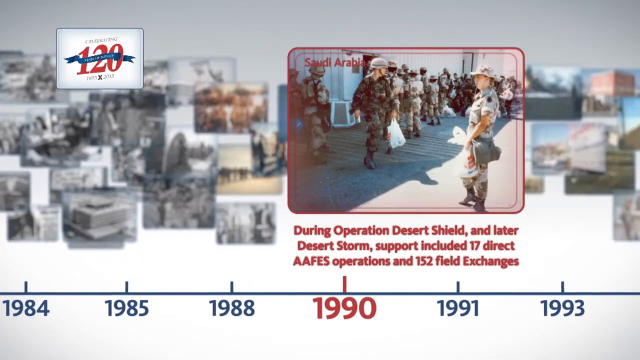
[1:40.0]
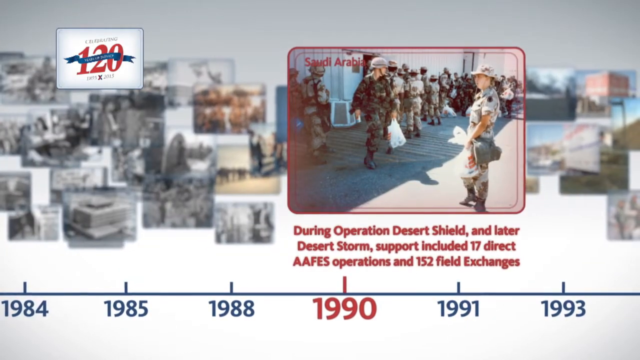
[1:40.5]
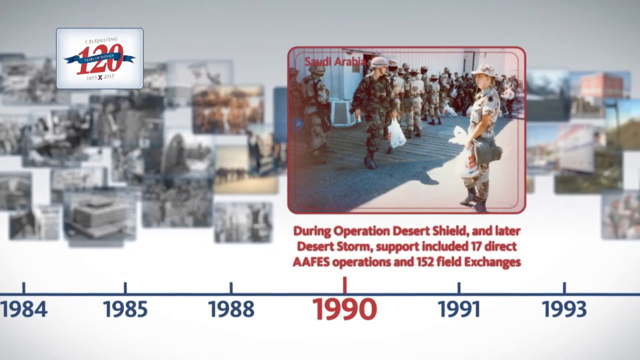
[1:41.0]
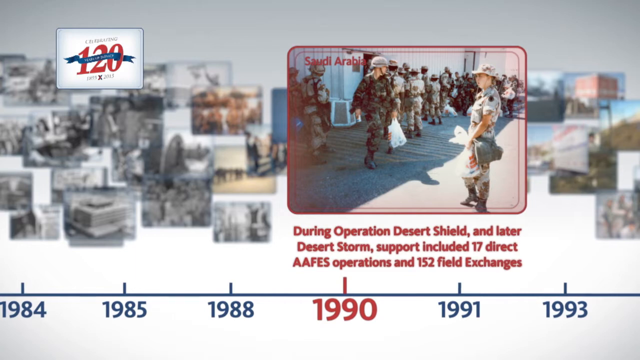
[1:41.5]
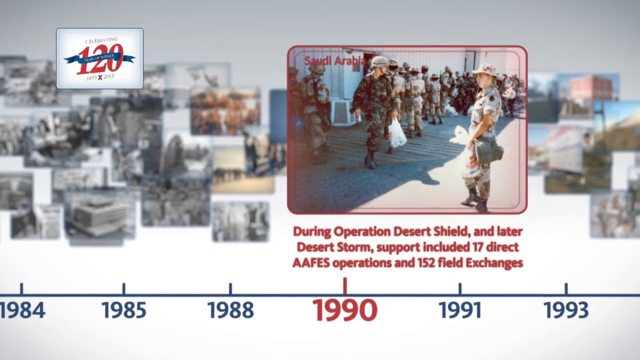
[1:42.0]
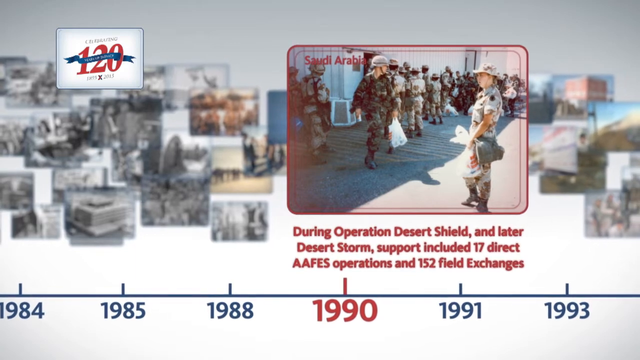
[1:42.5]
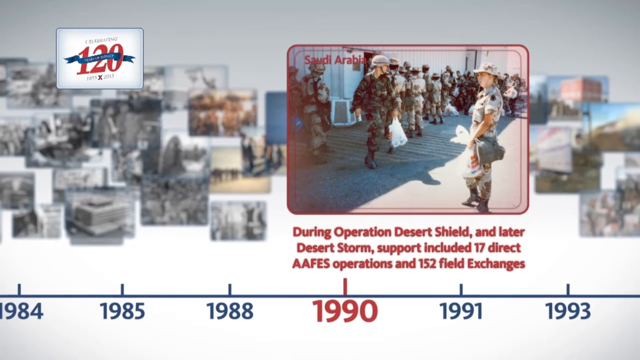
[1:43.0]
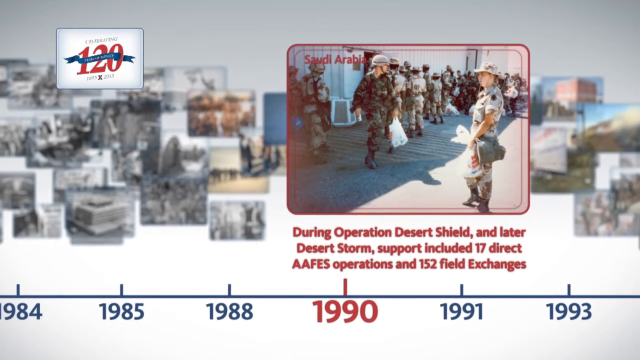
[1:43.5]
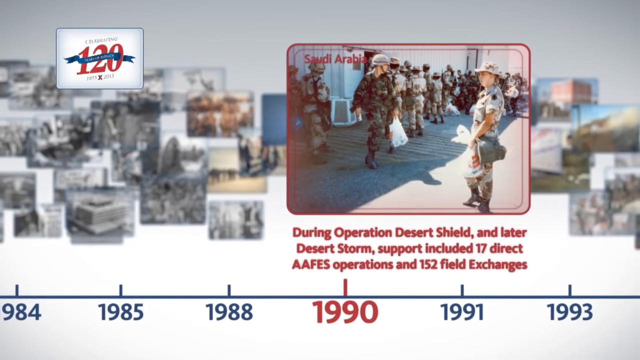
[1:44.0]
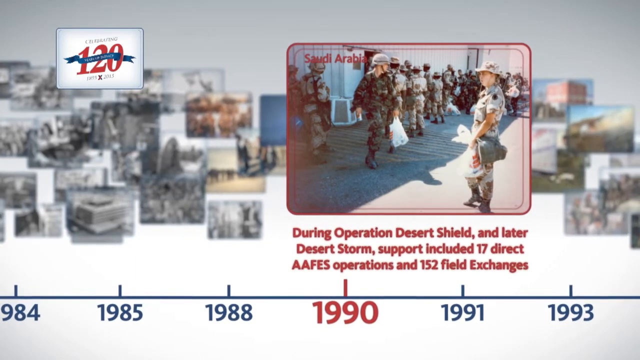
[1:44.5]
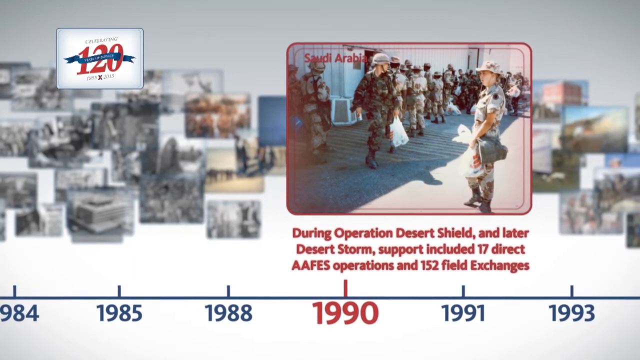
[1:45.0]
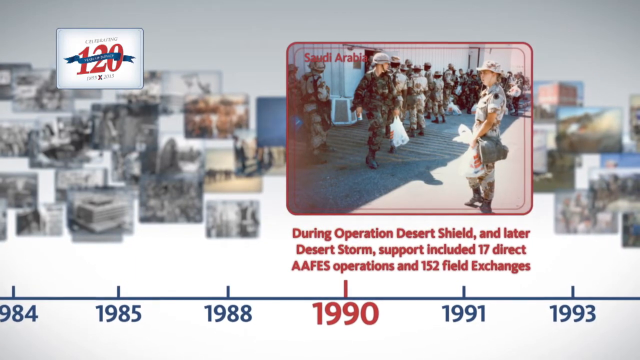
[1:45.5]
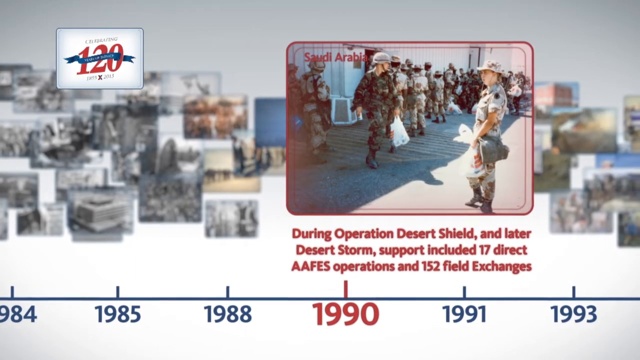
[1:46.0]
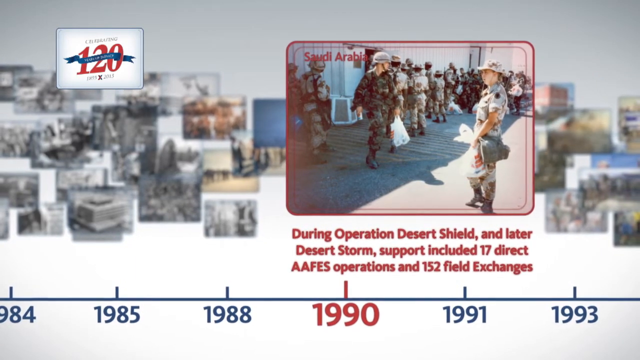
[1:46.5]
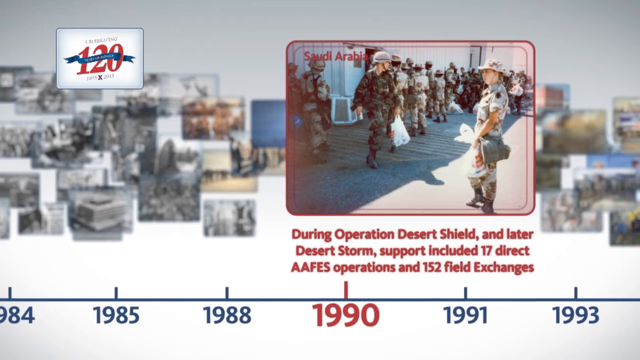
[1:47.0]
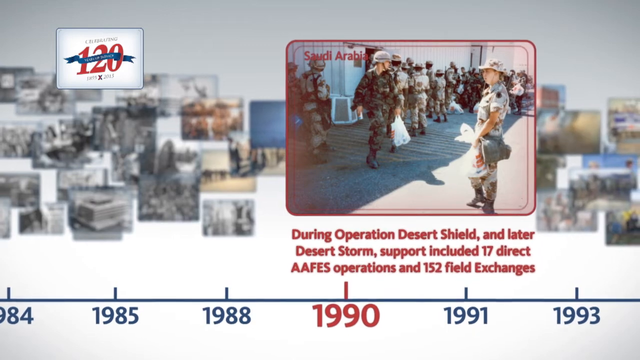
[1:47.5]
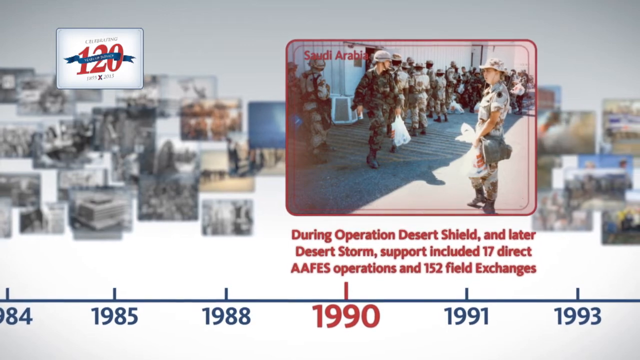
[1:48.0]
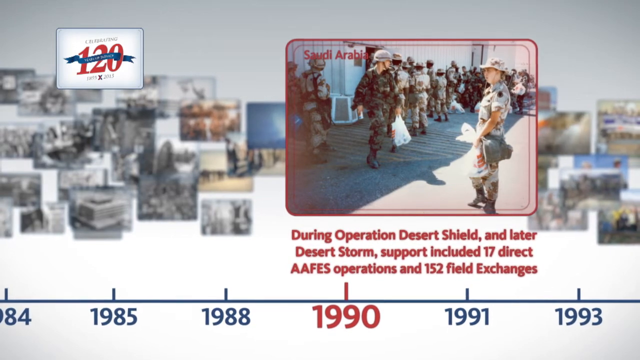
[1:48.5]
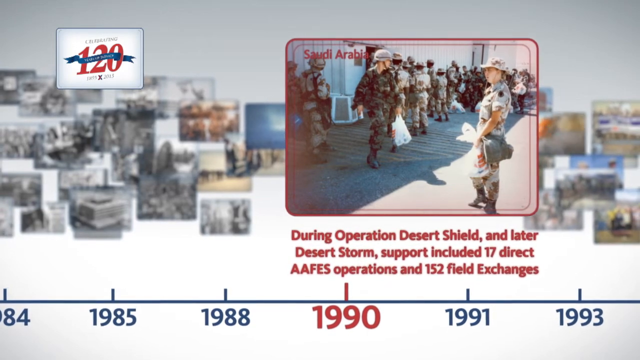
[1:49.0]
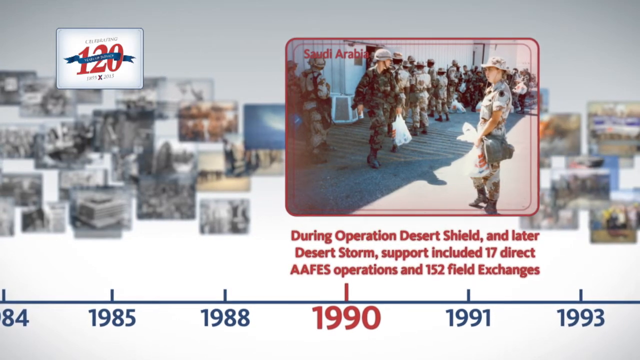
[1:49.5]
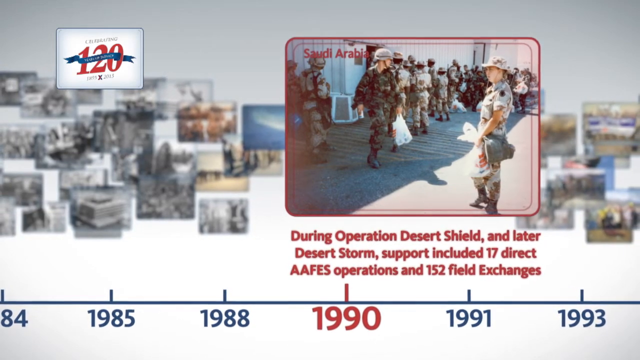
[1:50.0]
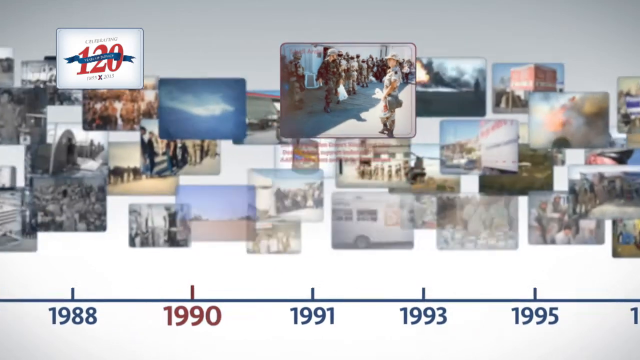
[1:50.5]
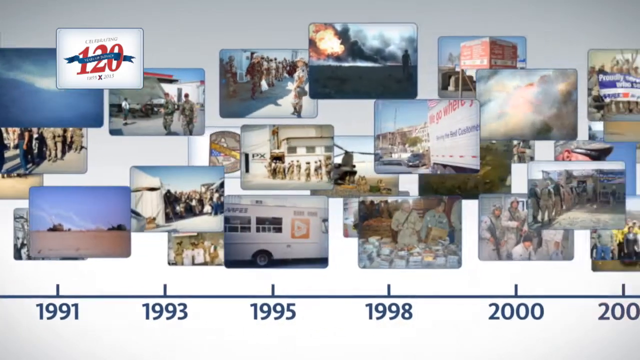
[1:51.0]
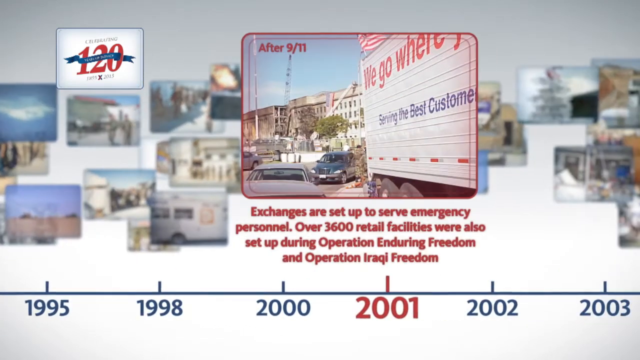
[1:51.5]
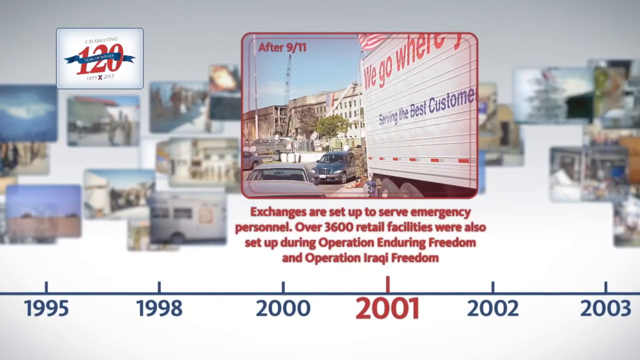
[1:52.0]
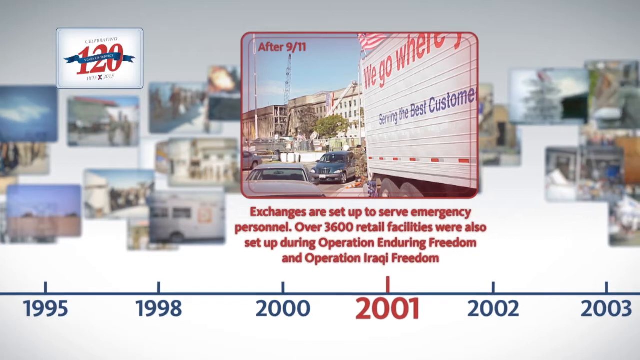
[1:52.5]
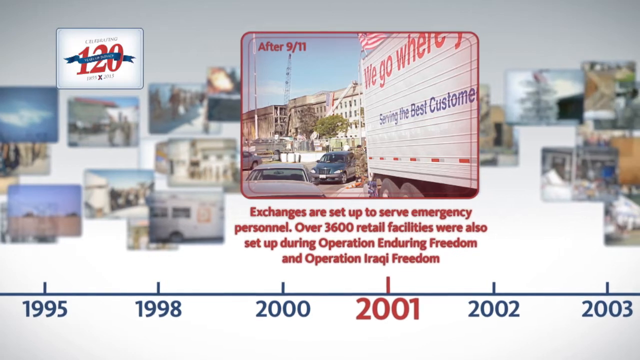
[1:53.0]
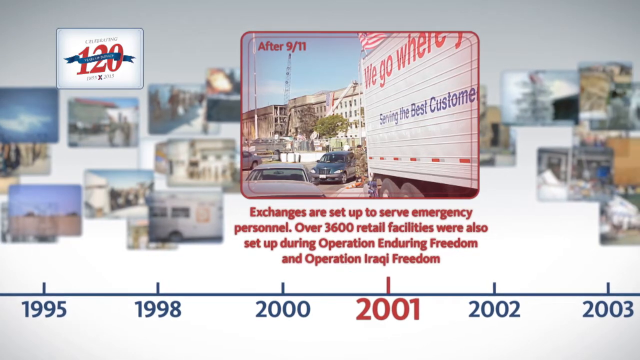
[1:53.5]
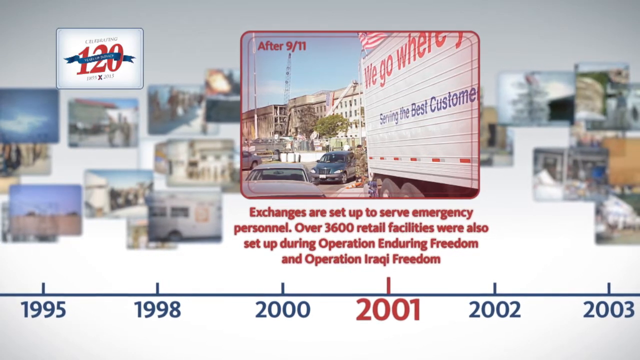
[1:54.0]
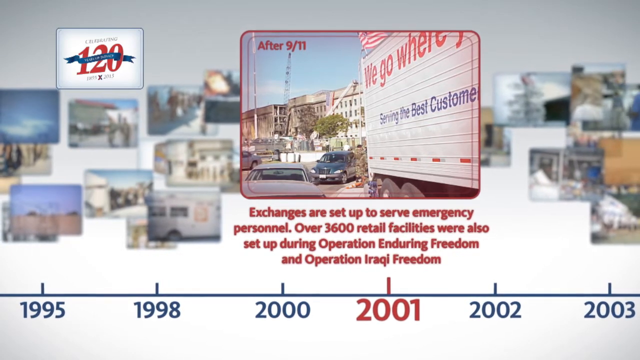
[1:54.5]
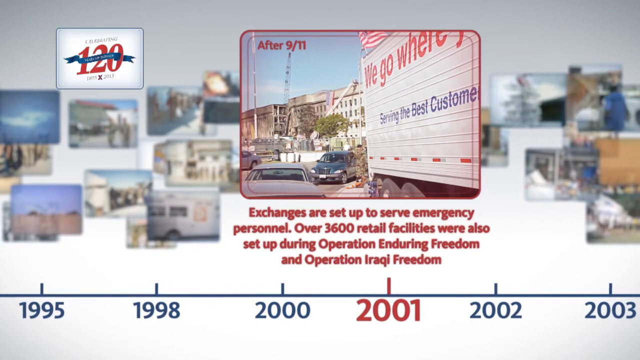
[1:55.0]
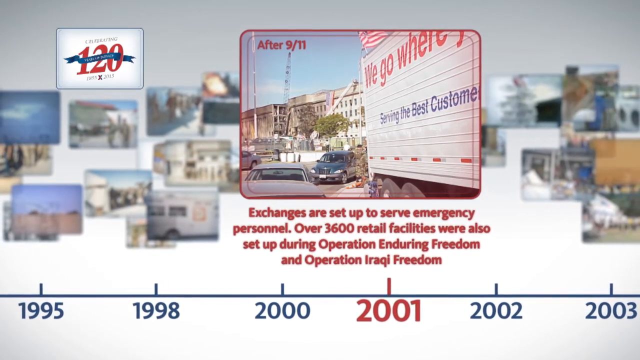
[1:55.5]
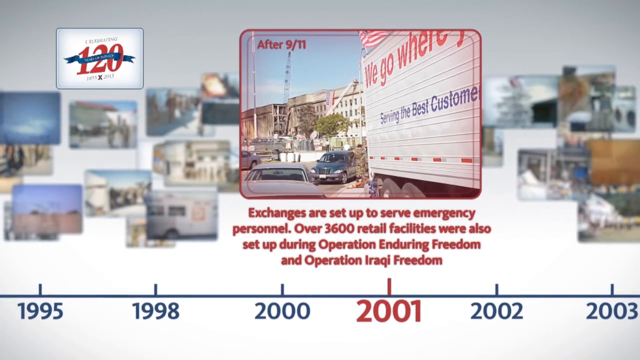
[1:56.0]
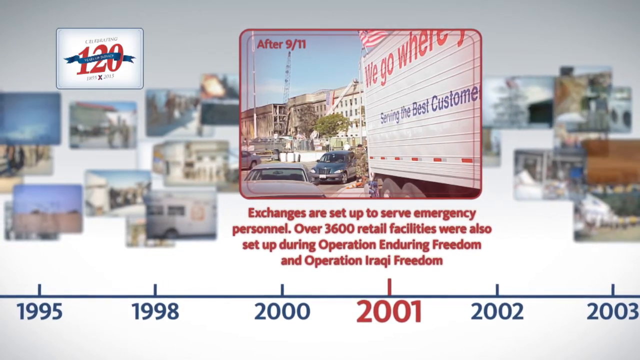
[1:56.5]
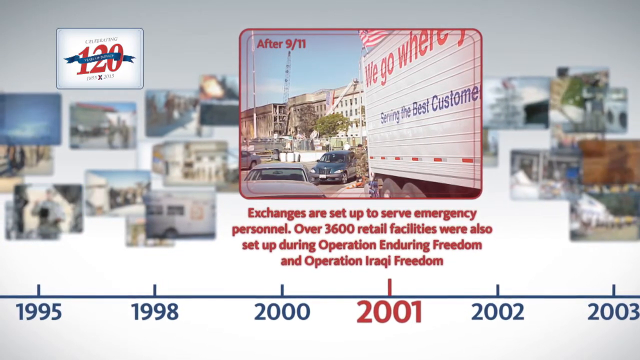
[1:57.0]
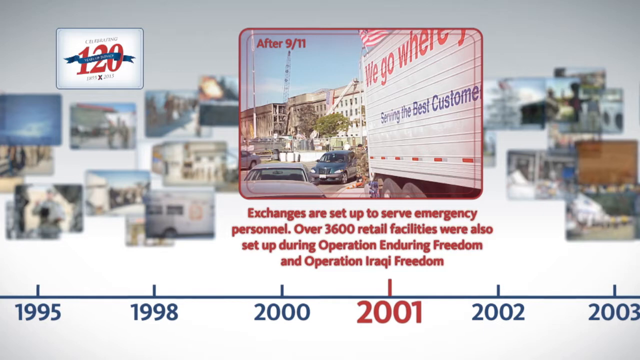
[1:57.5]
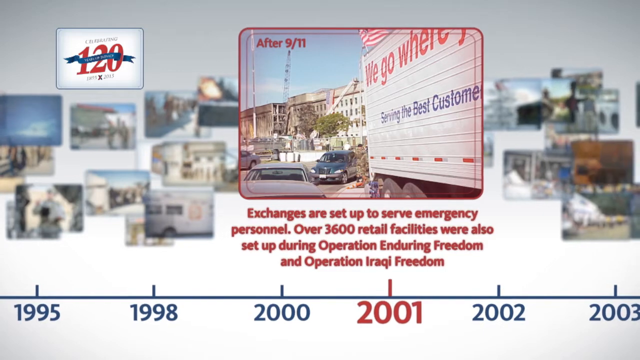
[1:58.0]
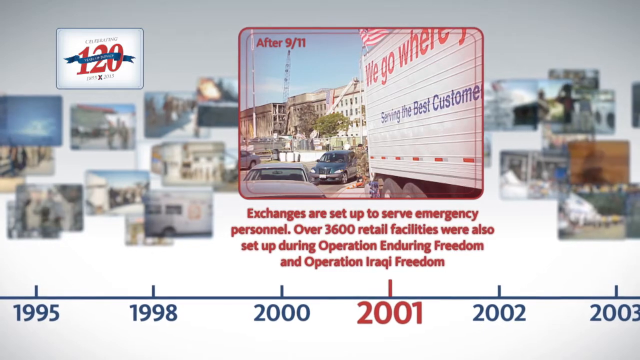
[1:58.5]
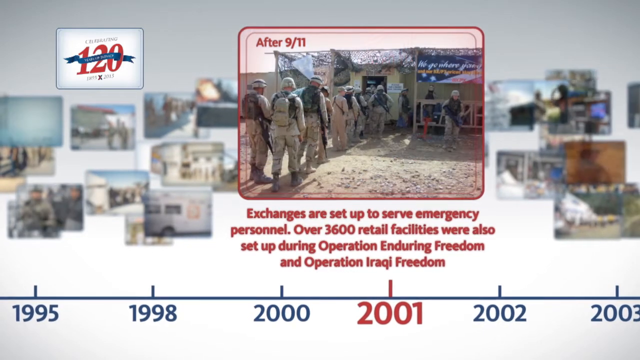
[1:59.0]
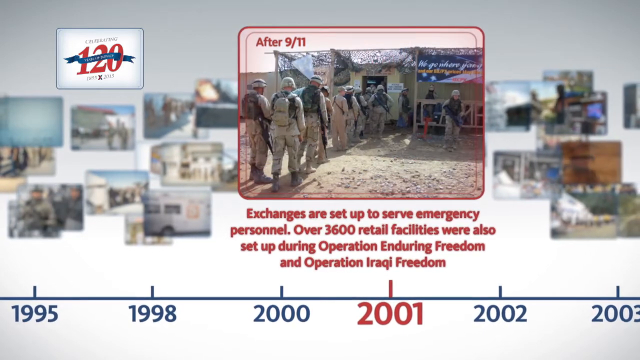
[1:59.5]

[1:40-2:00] The timeline reaches 1990, with text about support during Operation Desert Shield and later Desert Storm, citing figures of 17 and 132. The highlighted photograph is now in color, and its upper left corner gives the location as Saudi Arabia. For 2001, the text states that exchanges were set up after 9-11 to serve emergency personnel, and that 3,600 retail facilities were set up during Operation Enduring Freedom and Operation Iraqi Freedom; this text is written below the photograph highlighted in red. A color photograph showing one of the exchanges in New York is shown, bordered in red with the red fading into the photograph.